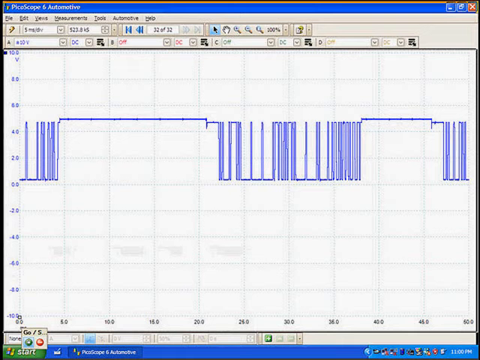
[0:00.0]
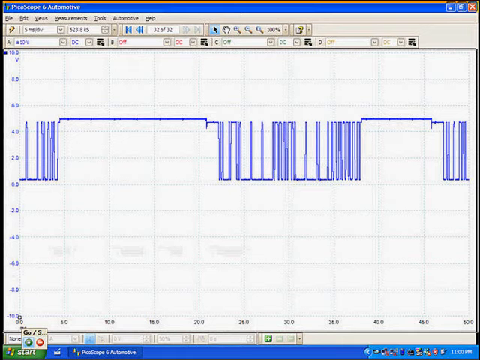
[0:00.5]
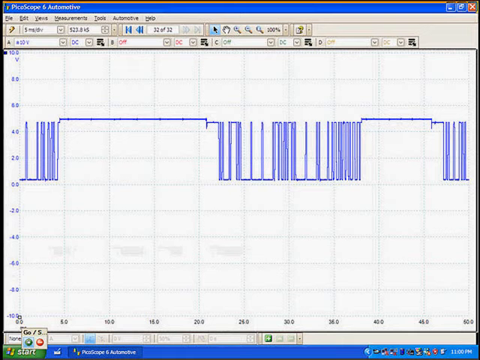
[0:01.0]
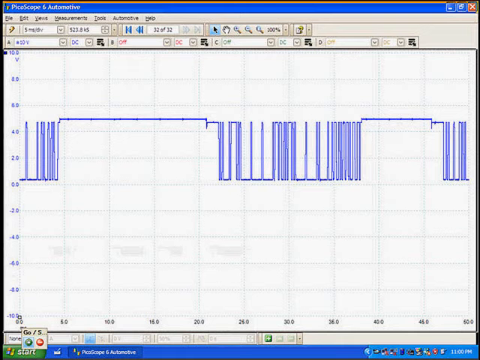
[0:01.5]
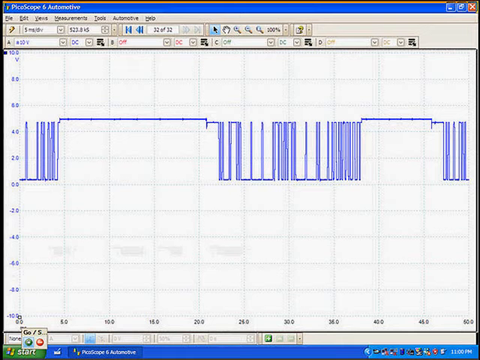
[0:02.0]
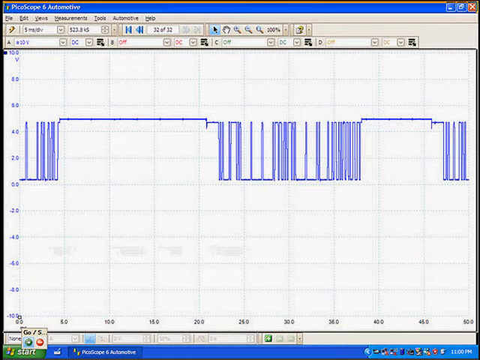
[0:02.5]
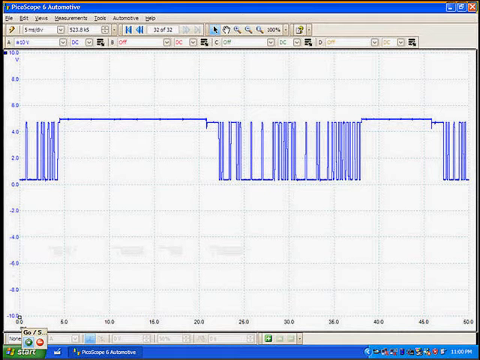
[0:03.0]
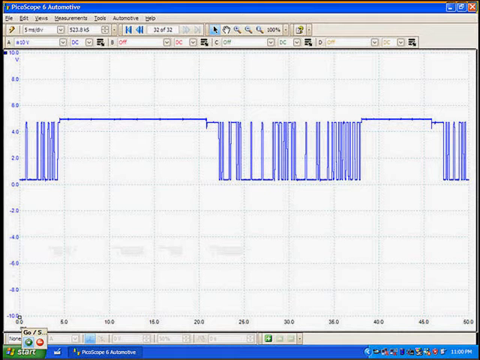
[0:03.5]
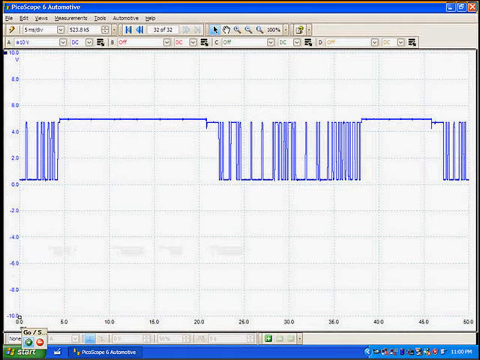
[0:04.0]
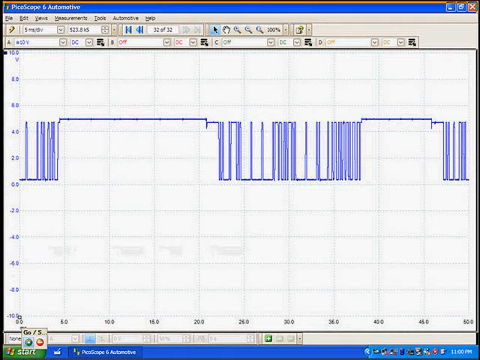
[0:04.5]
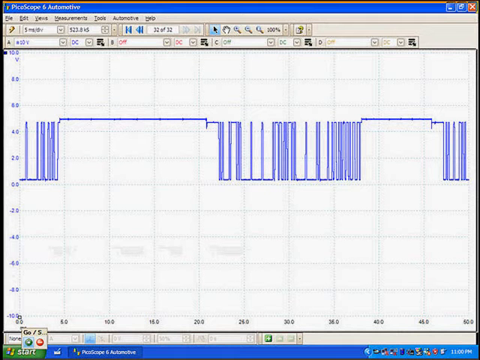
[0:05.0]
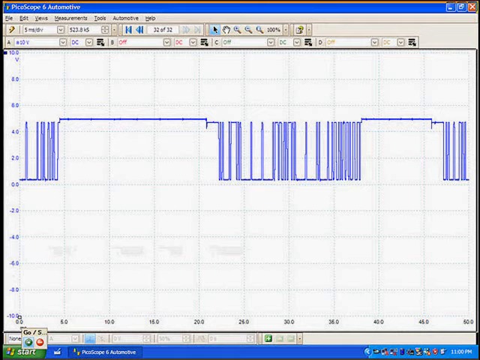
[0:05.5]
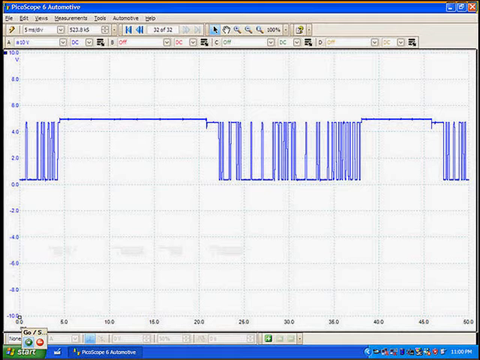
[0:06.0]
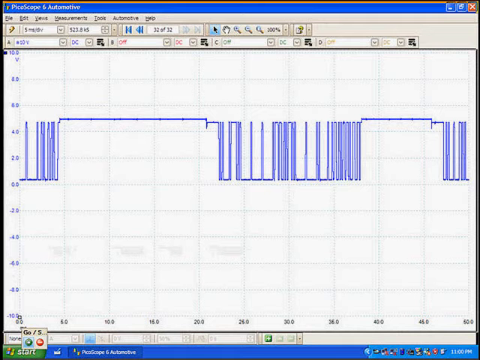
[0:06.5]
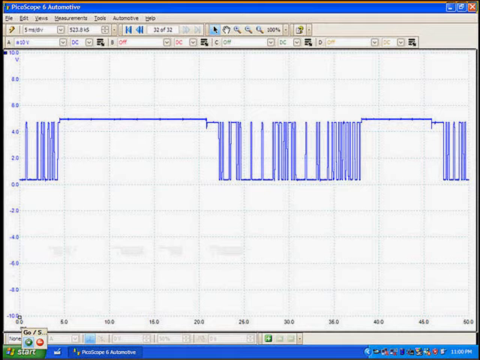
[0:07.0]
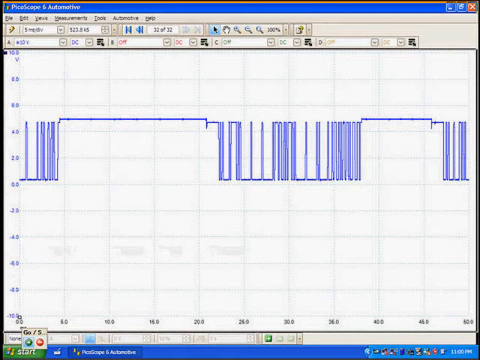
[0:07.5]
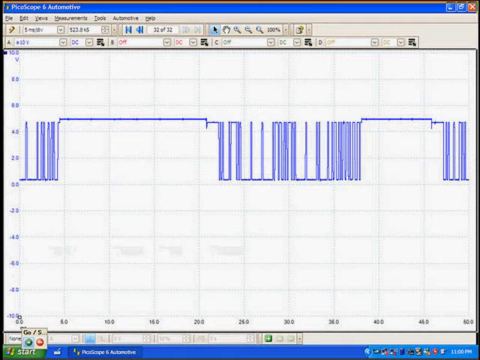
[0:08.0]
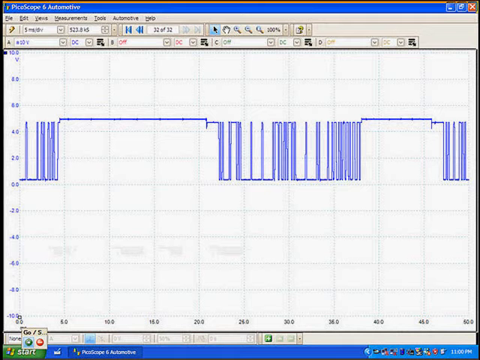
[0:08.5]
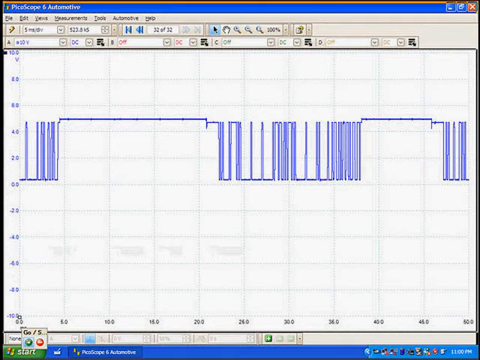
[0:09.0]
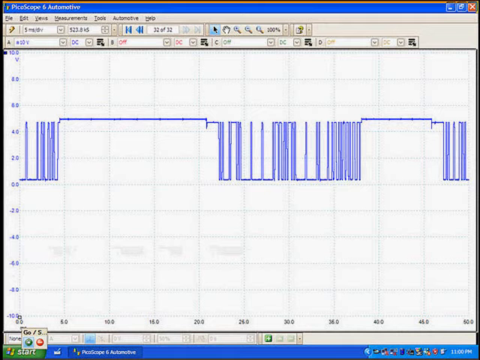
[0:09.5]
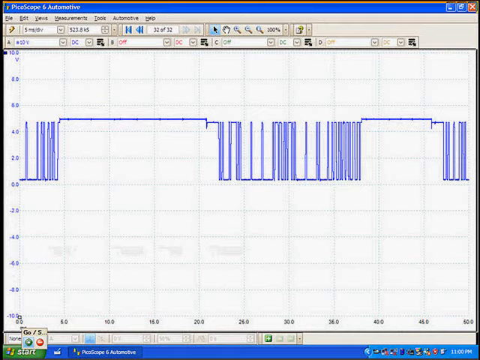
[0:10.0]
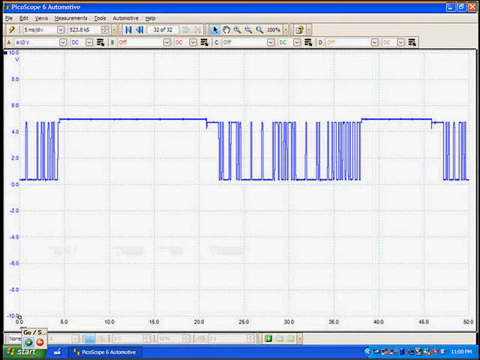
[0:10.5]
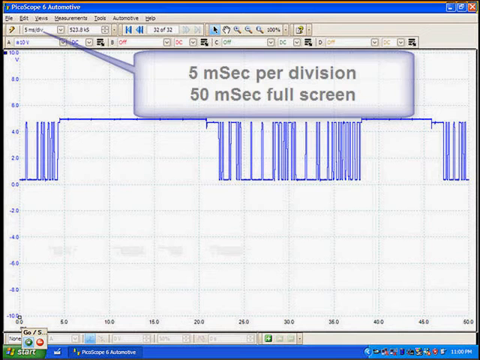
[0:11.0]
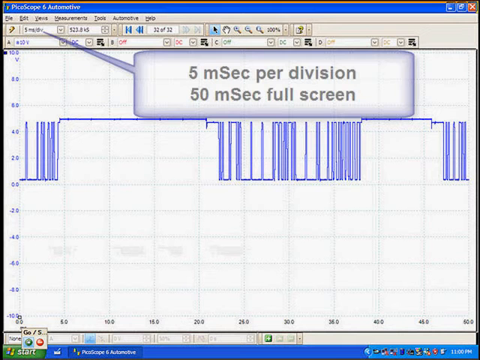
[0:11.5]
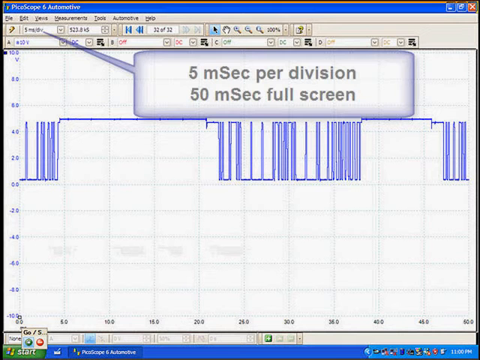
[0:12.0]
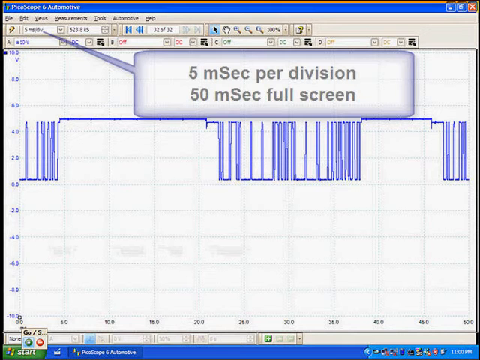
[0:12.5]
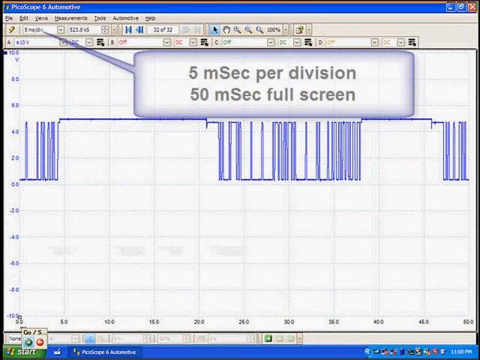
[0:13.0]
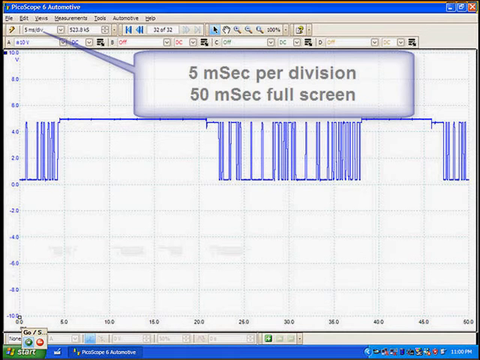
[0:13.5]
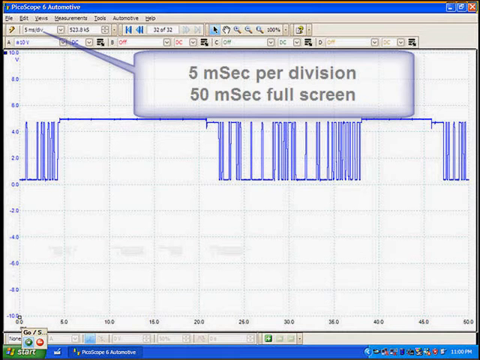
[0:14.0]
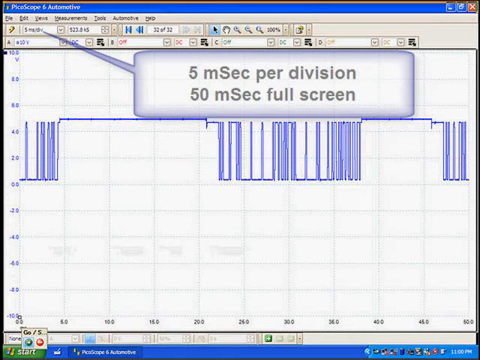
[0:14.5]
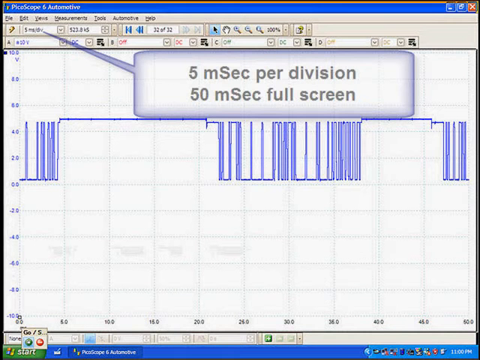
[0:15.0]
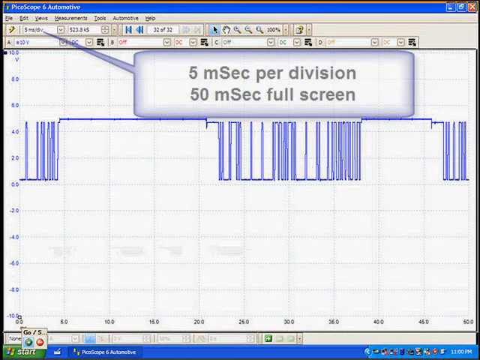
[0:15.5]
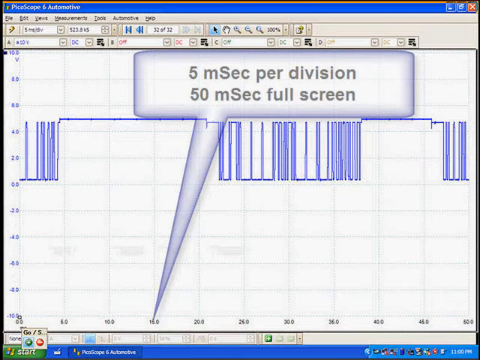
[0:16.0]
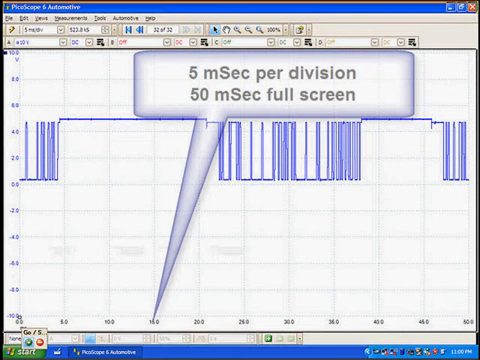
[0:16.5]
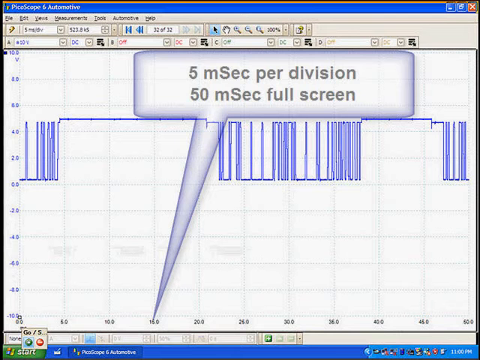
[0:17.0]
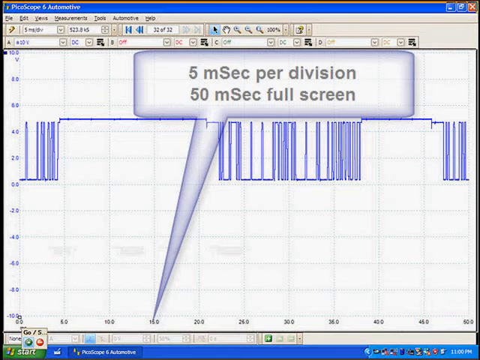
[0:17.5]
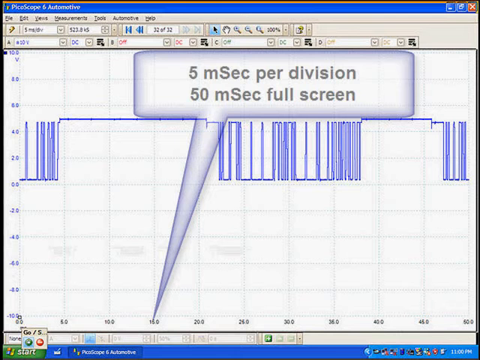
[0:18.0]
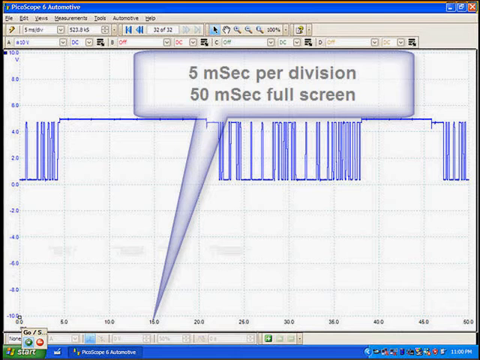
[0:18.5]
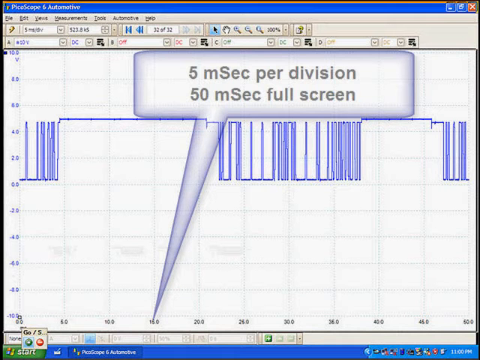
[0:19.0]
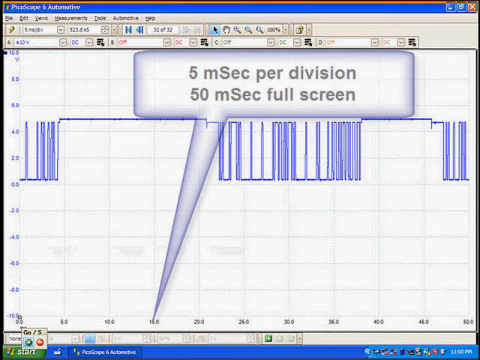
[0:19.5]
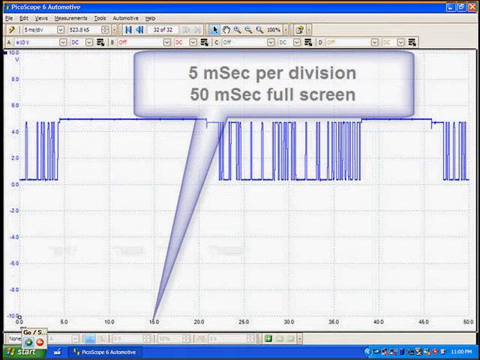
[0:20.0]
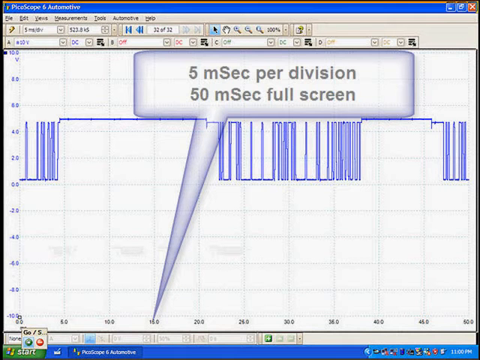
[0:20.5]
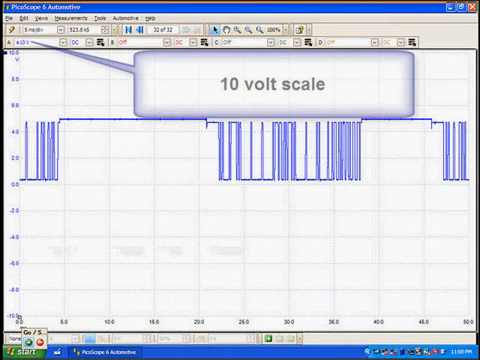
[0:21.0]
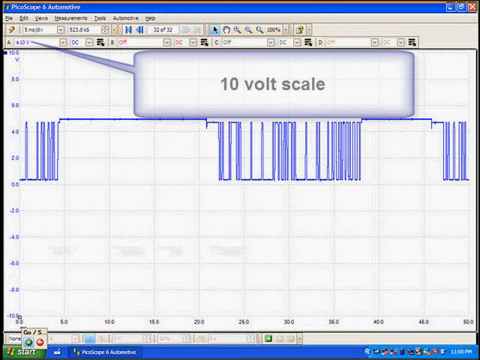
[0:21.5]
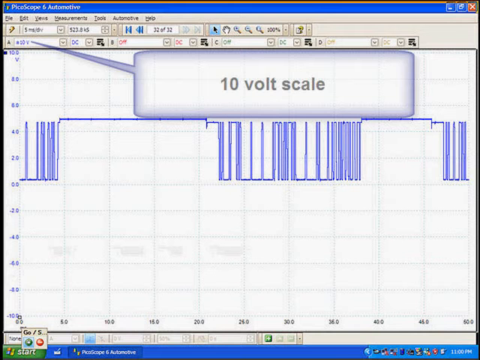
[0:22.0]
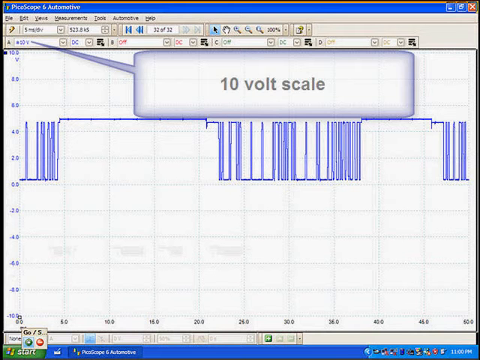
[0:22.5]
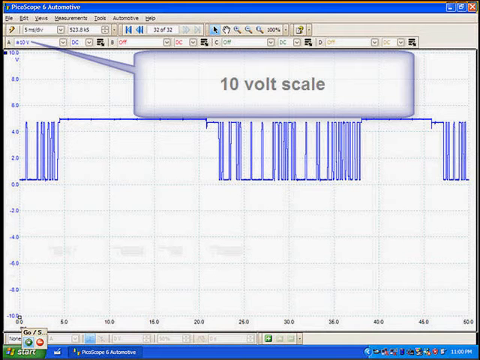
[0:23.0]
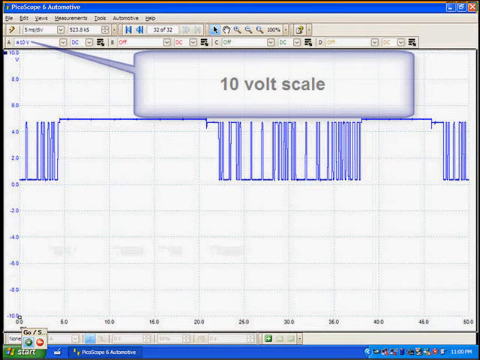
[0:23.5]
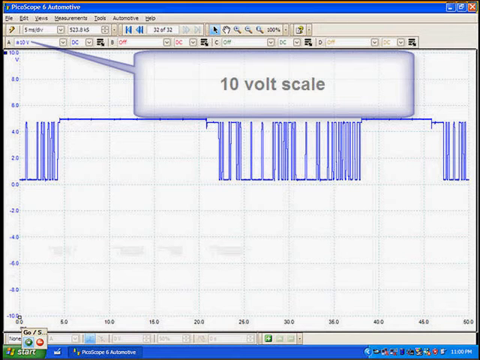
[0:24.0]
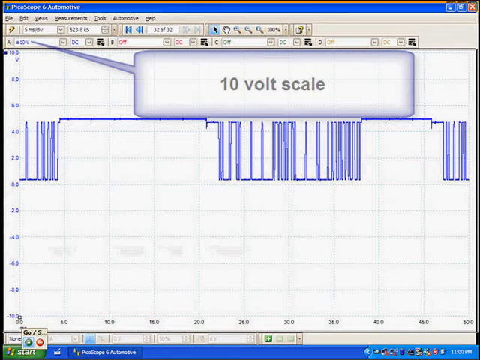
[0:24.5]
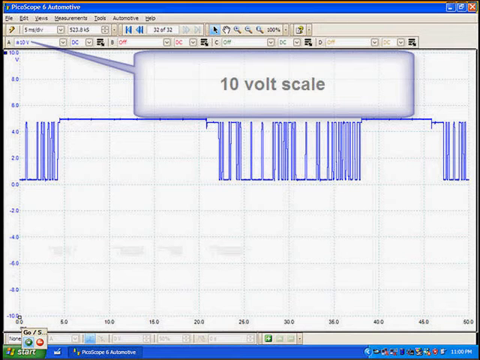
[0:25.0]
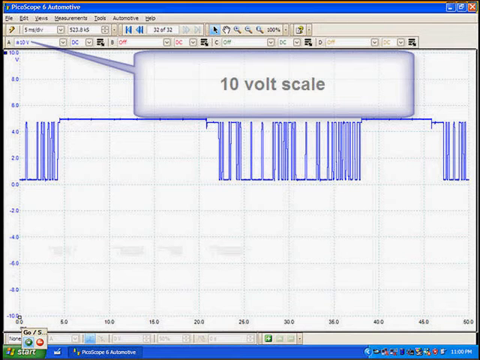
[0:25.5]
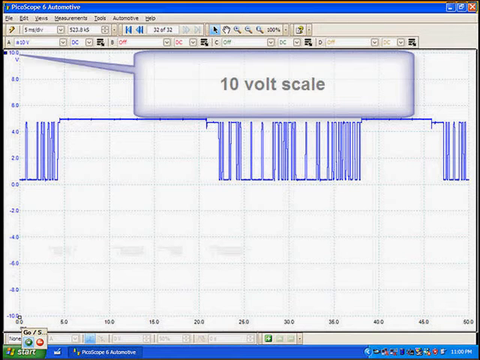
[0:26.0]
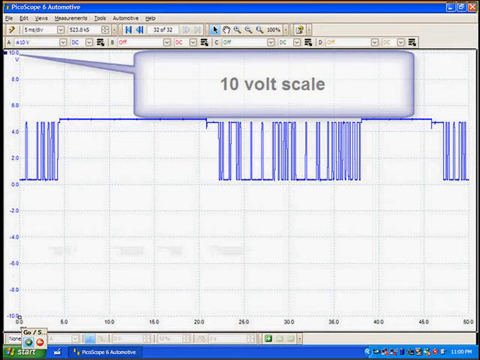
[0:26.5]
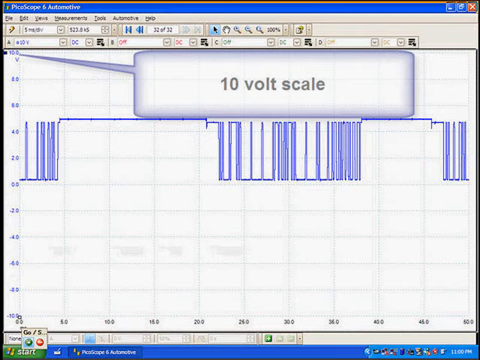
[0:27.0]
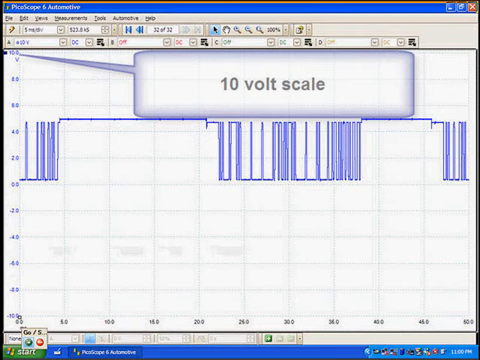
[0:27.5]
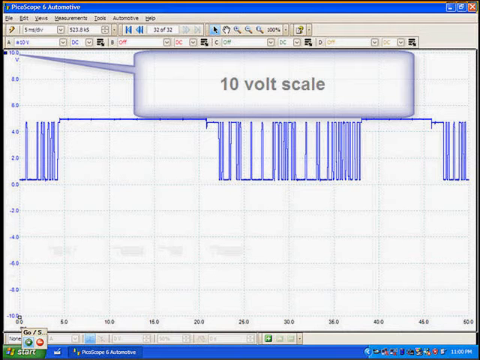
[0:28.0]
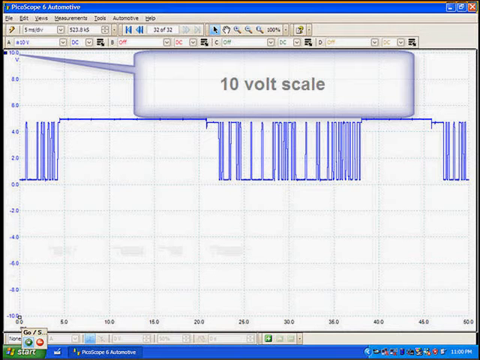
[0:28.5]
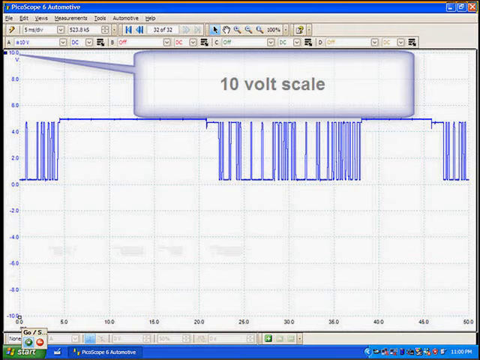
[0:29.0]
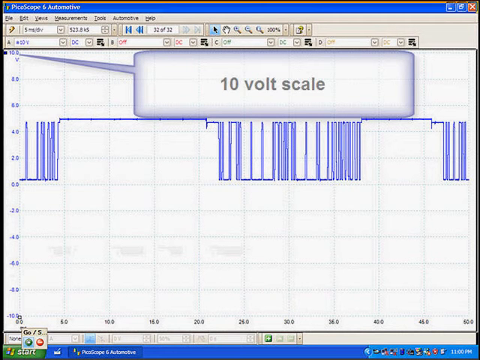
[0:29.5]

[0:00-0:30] A chart in some type of application on a Windows computer runs across the center of the screen. A text overlay pops up that reads "5 MSEC per division, 50 MSEC full screen," one of the settings in the drop-down menu in the upper left part of the program. Several drop-down menus set different values and options for the chart. The application's name appears to be PicoScope 6 Automotive. Another drop-down menu reads "10 volt scale," and the text overlay points to it. In the lower left is the green start button, with the toolbar across the bottom of the screen, and this is the only window open on the computer. The program has a chart in the middle and is some type of automotive program.